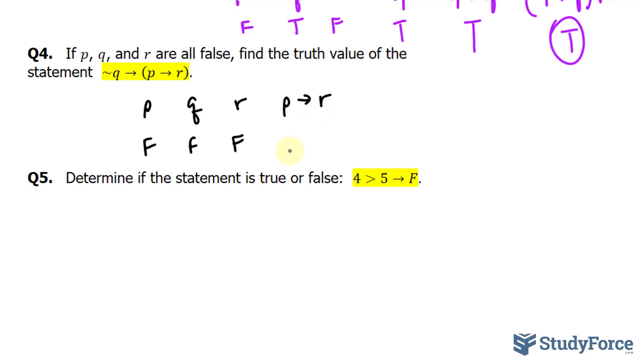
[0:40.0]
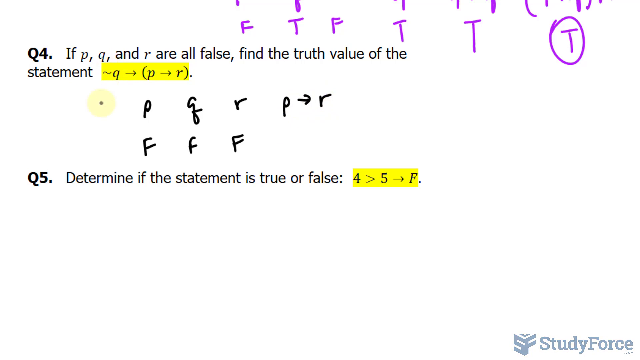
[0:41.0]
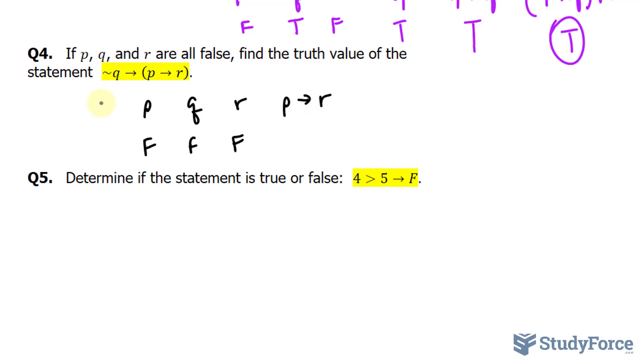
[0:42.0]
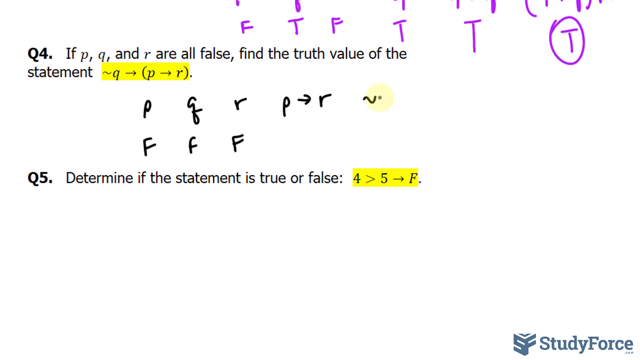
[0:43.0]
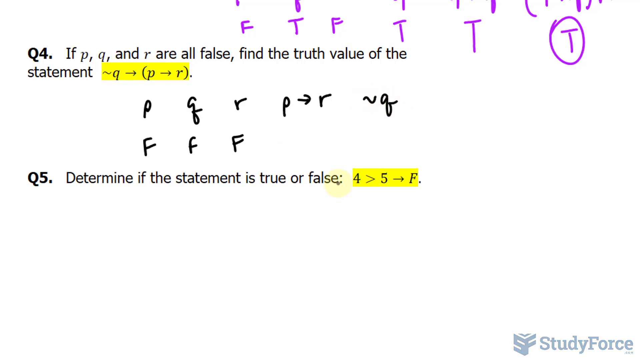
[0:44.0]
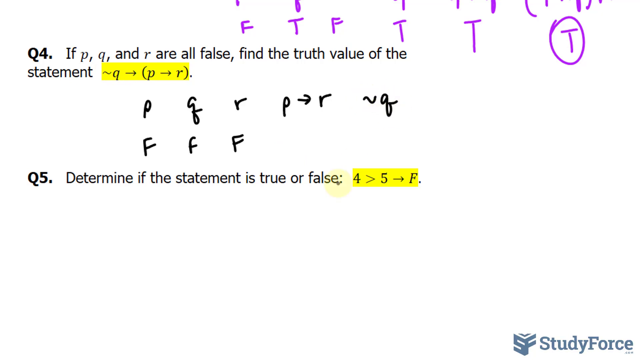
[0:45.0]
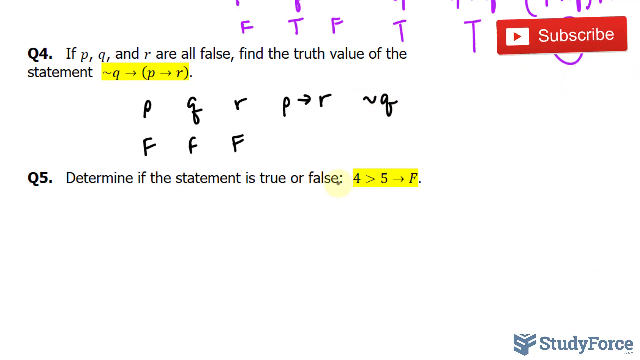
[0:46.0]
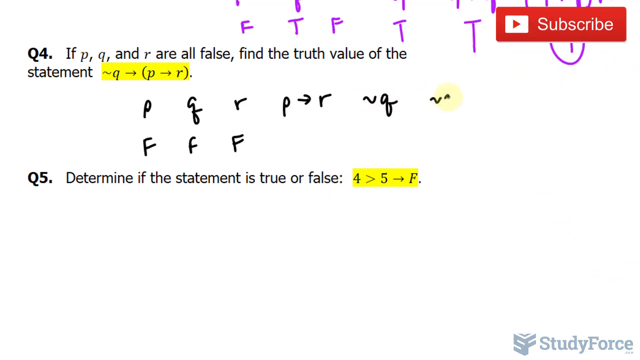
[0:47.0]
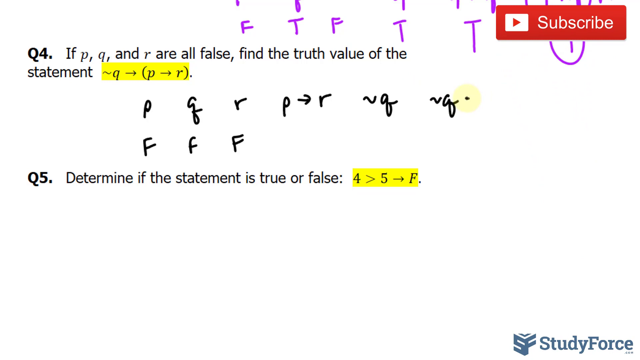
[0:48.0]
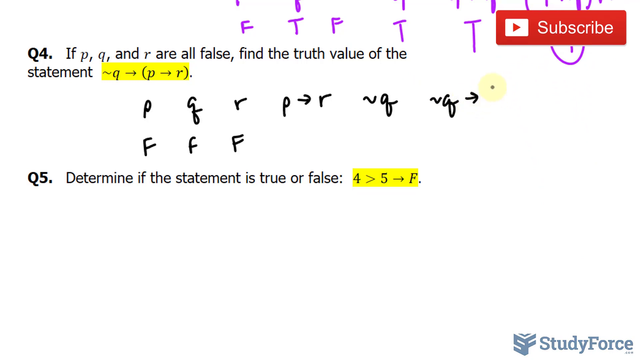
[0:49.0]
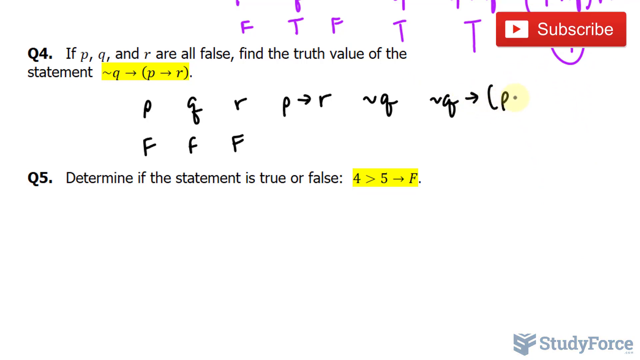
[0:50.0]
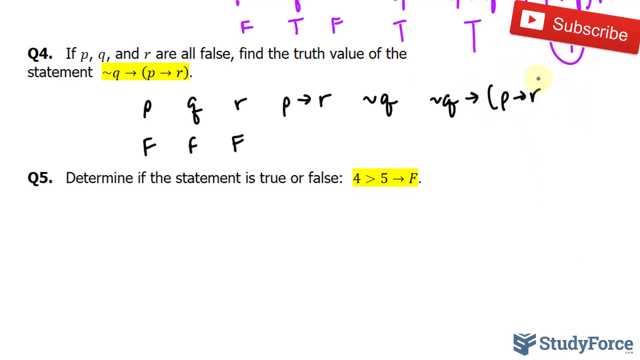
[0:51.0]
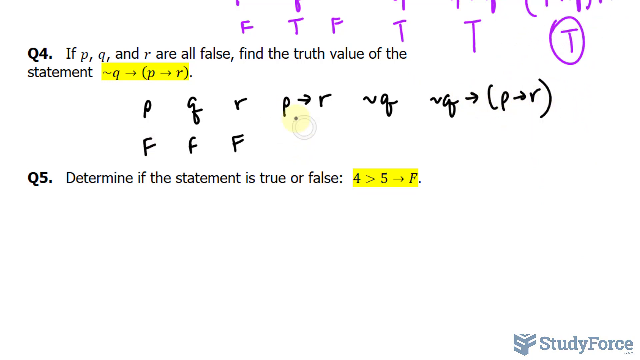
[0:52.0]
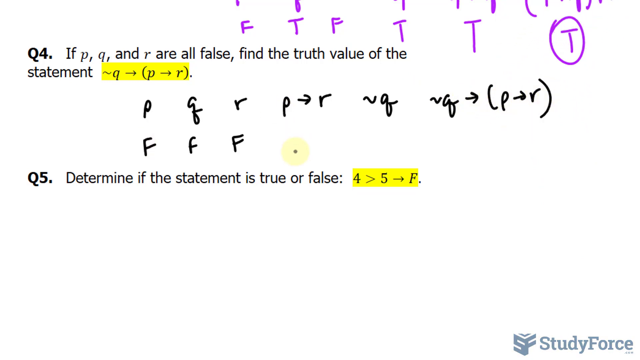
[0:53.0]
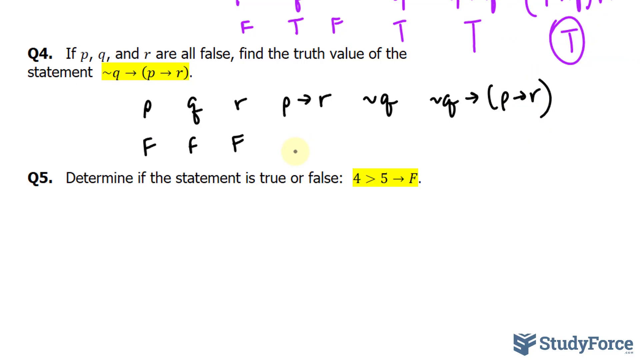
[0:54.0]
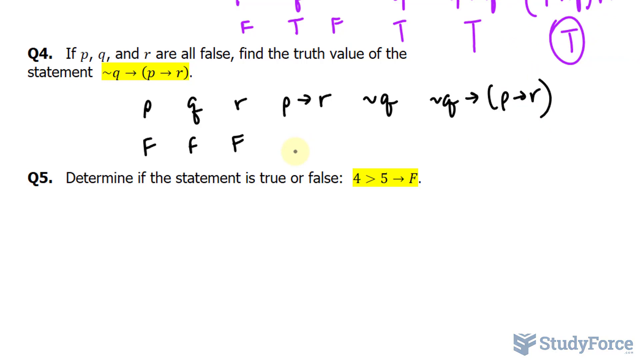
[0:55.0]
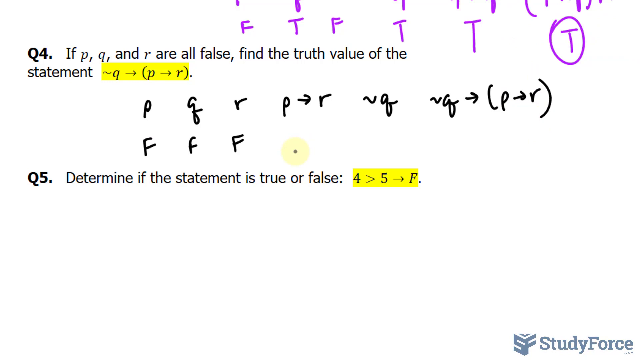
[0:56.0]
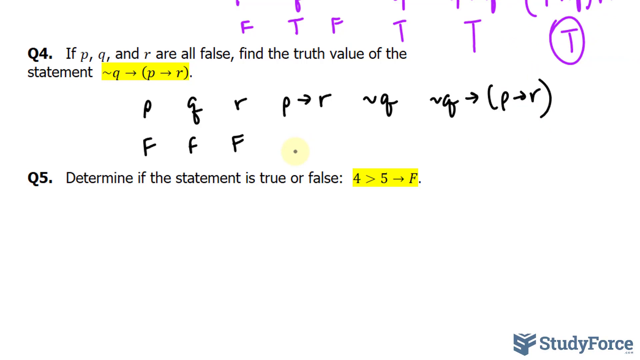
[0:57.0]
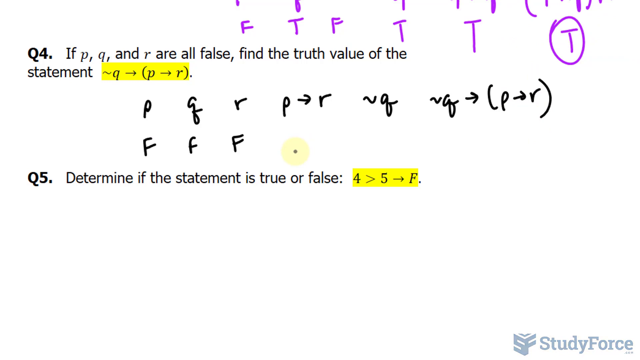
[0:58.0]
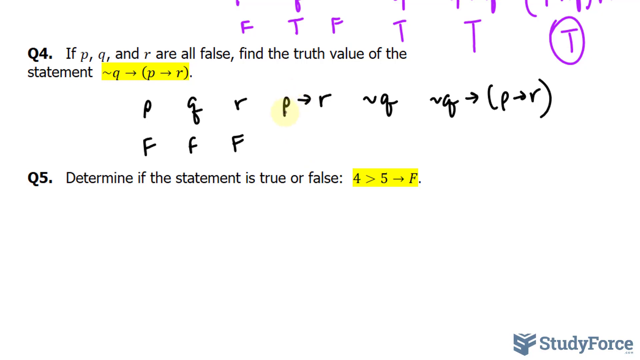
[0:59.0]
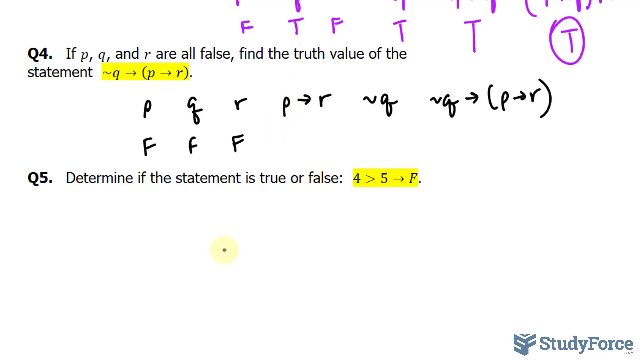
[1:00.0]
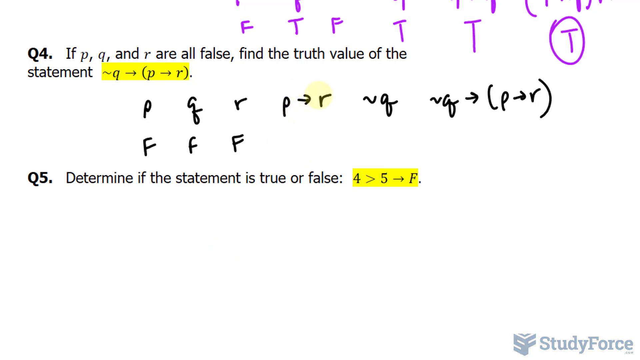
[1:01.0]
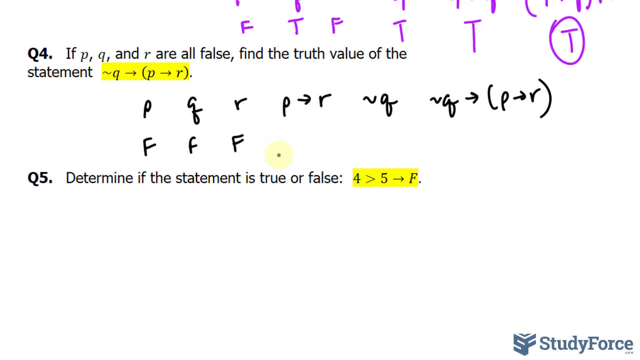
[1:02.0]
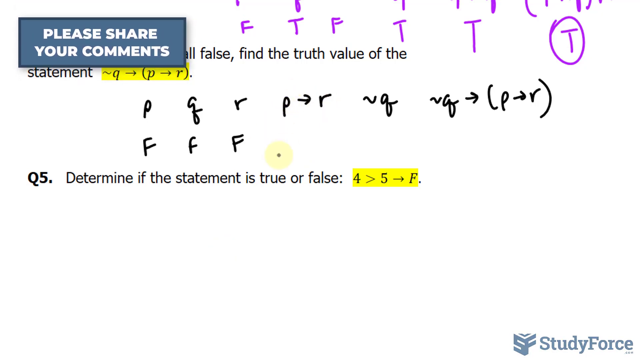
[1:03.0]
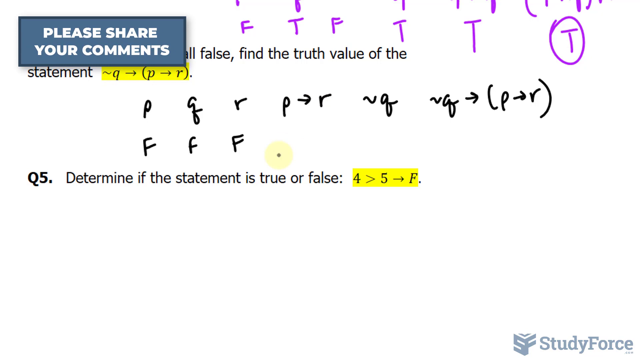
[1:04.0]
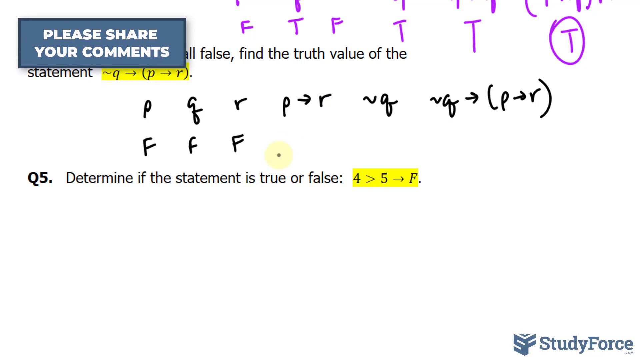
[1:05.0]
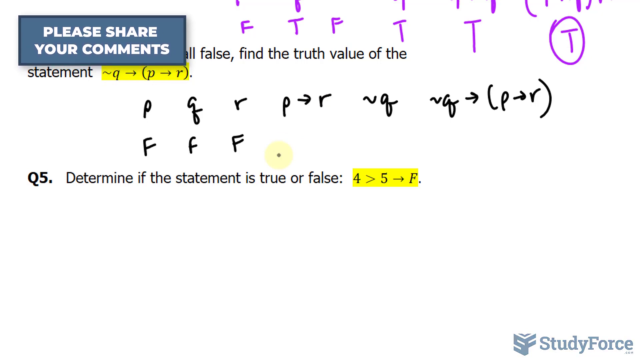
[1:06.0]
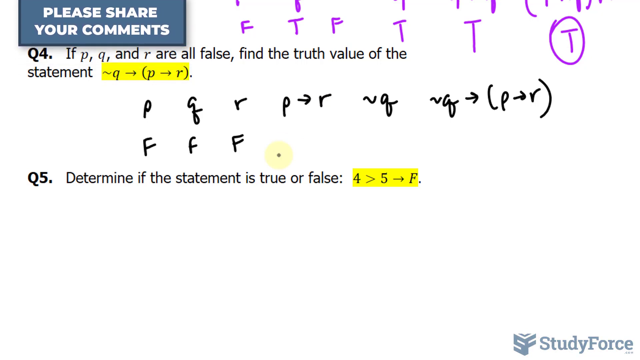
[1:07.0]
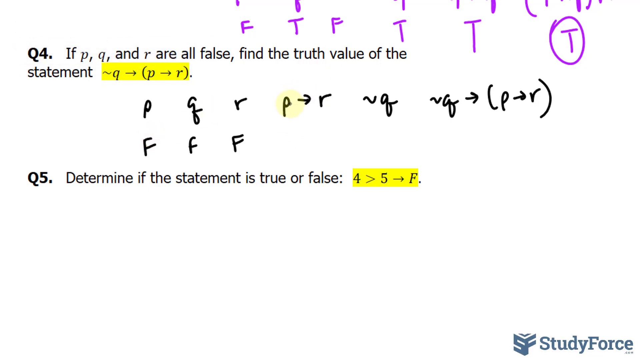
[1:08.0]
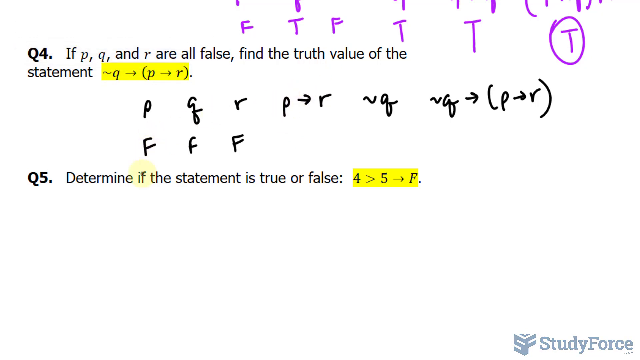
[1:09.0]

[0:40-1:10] The cursor, made up of a very small circle with a large yellow concentric circle, moves from the left side of the screen to the right and writes some characters in the white space between Q4 and Q5. At the start, a red rectangular banner with the text "subscribe" is in the right corner of the screen; it stays still for a few seconds, then rotates and moves out of the frame. Near the end, another banner appears in the upper left corner of the screen: a blue rectangle with the text "please share your comments". After a few moments this banner leaves the frame, moving vertically upwards.